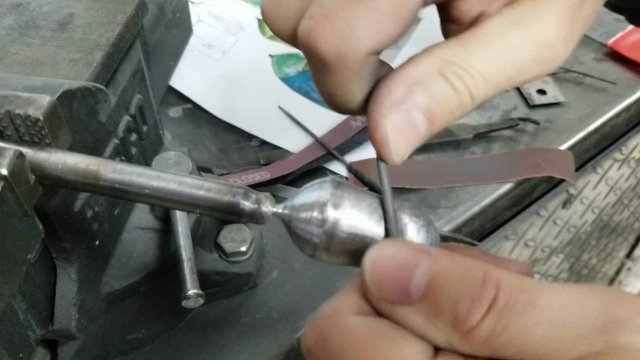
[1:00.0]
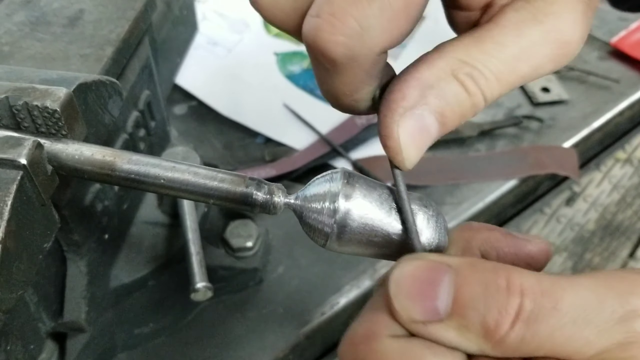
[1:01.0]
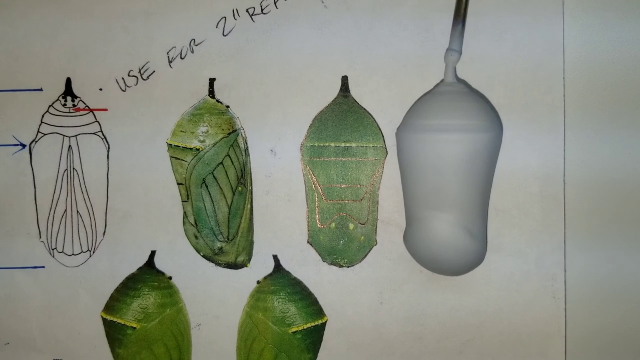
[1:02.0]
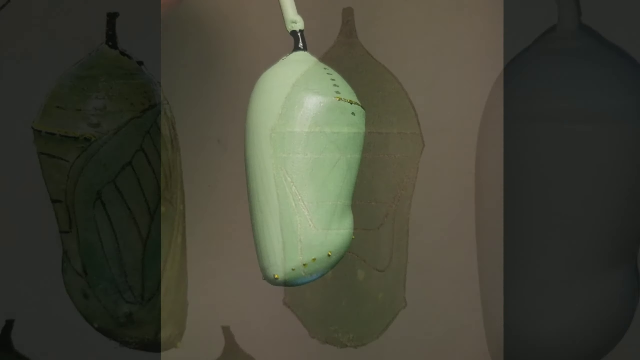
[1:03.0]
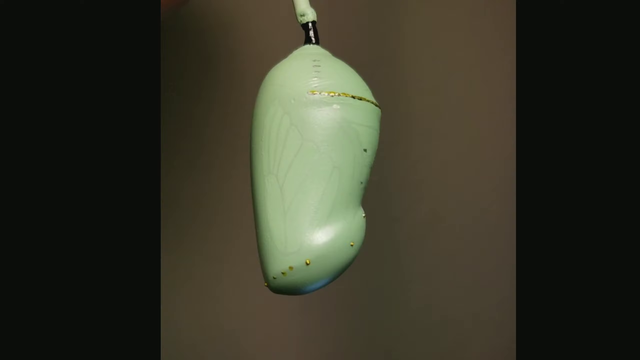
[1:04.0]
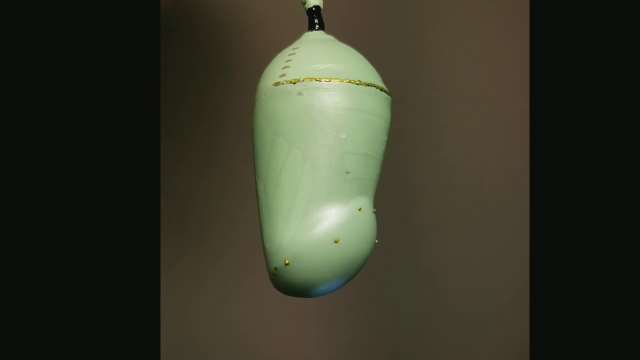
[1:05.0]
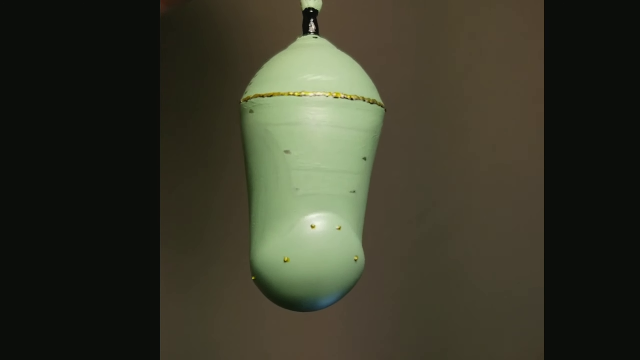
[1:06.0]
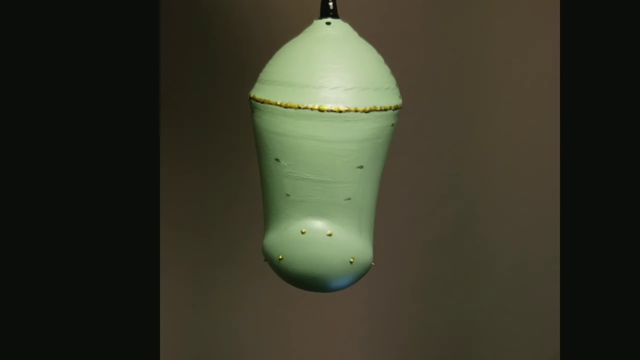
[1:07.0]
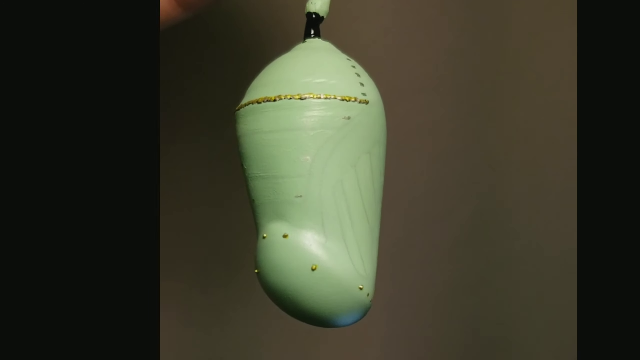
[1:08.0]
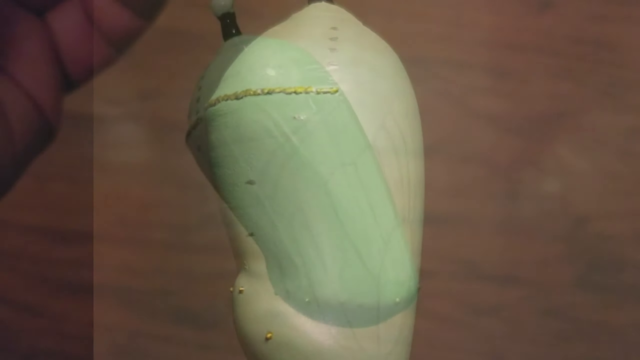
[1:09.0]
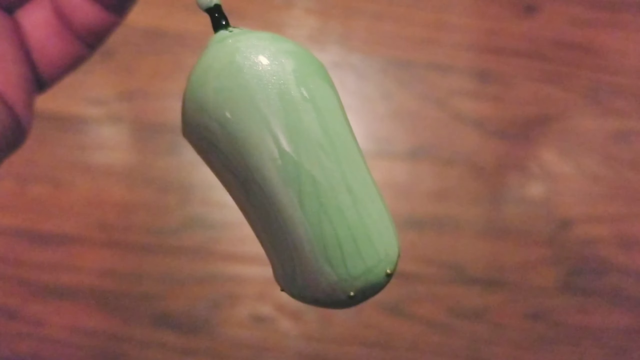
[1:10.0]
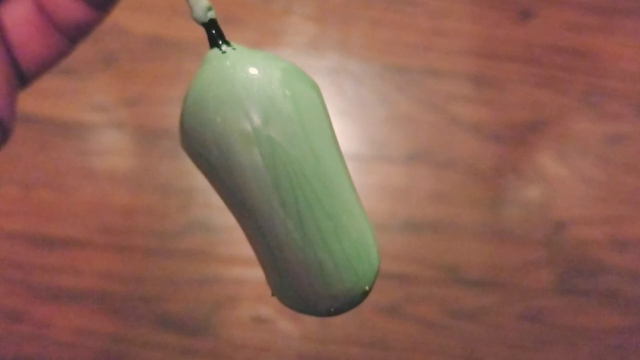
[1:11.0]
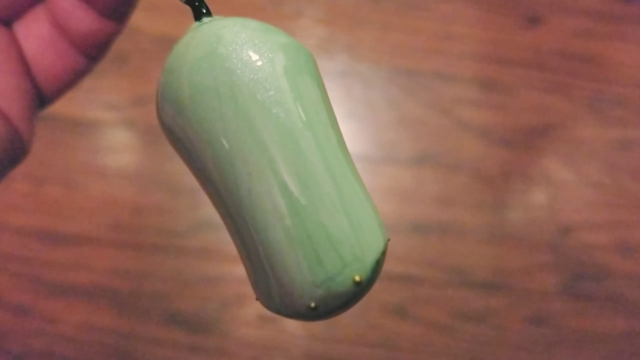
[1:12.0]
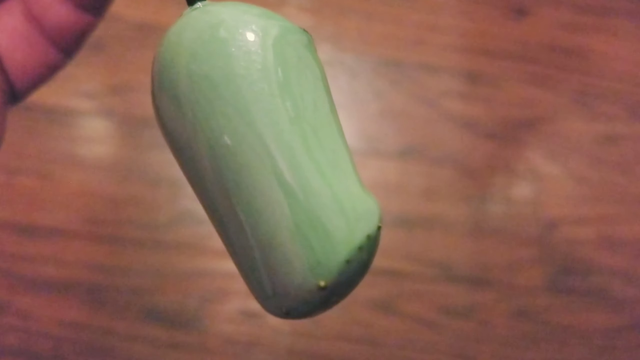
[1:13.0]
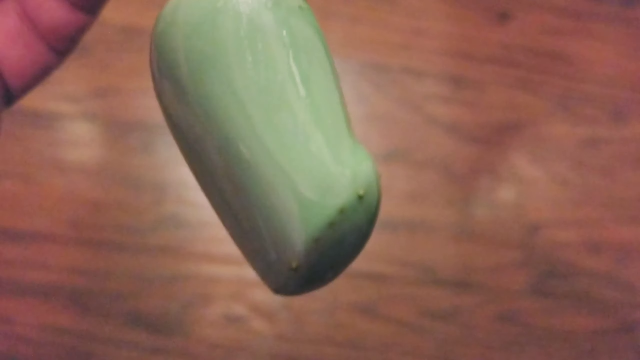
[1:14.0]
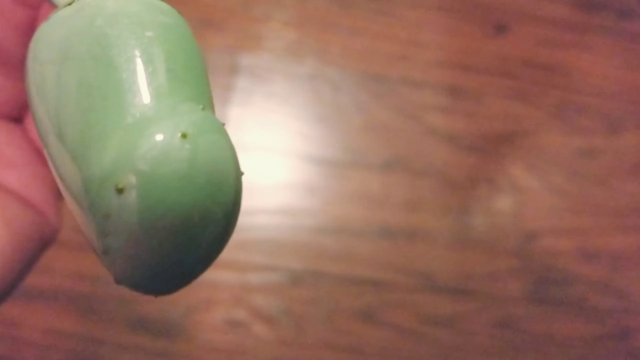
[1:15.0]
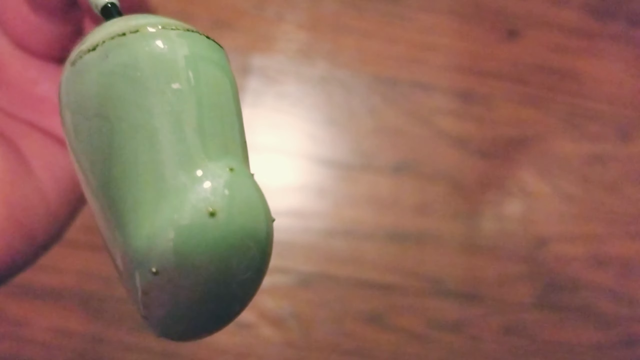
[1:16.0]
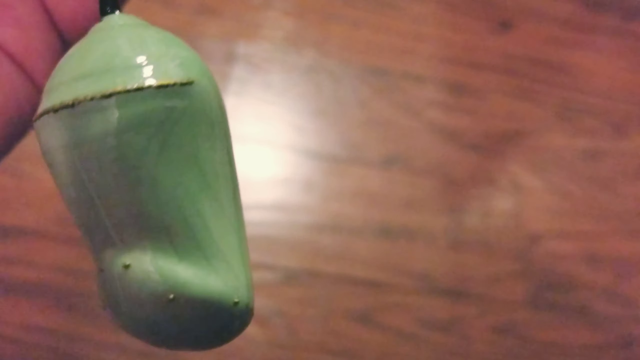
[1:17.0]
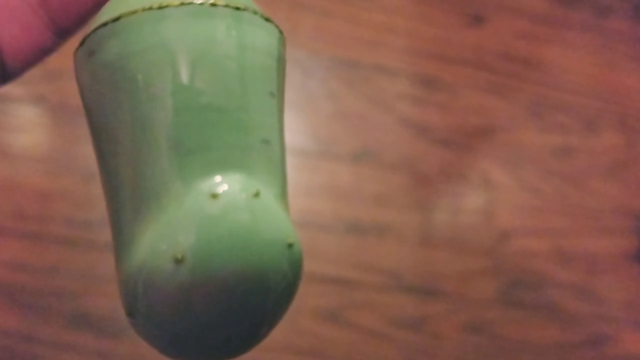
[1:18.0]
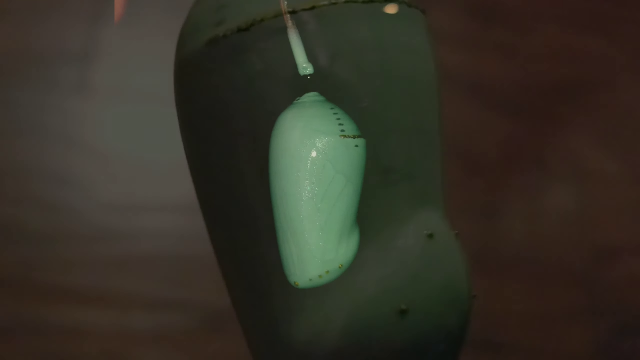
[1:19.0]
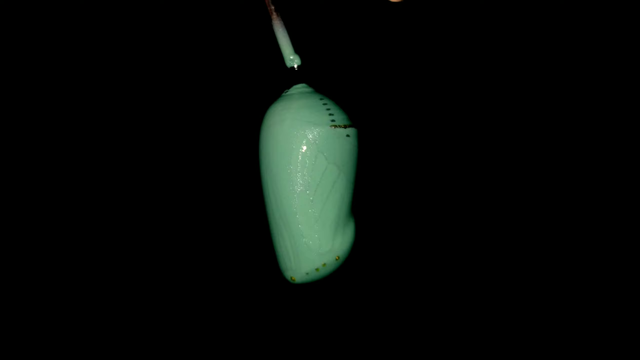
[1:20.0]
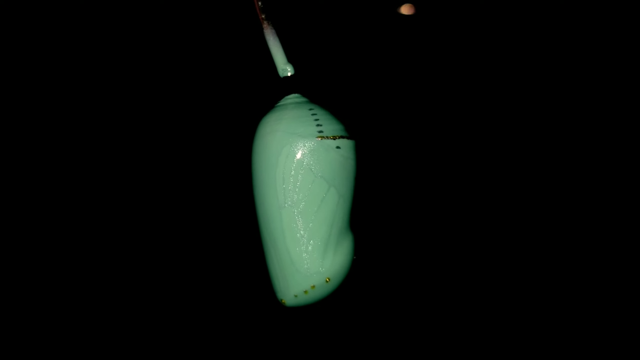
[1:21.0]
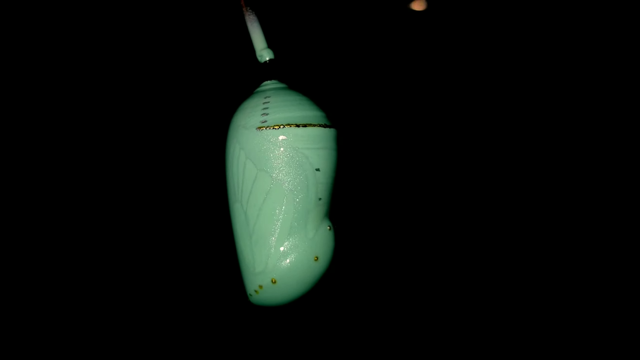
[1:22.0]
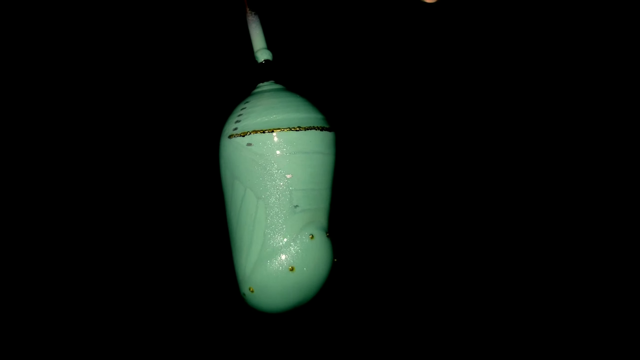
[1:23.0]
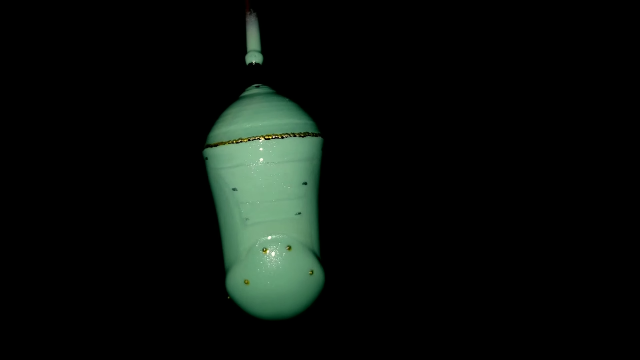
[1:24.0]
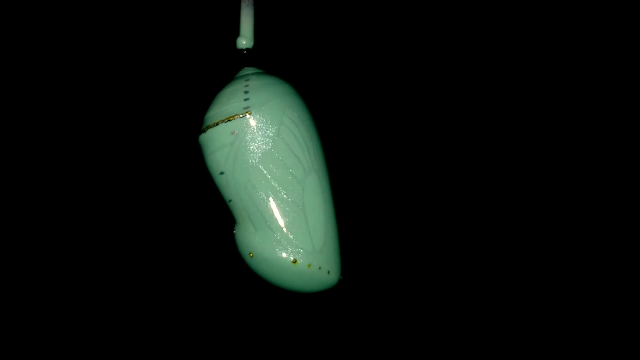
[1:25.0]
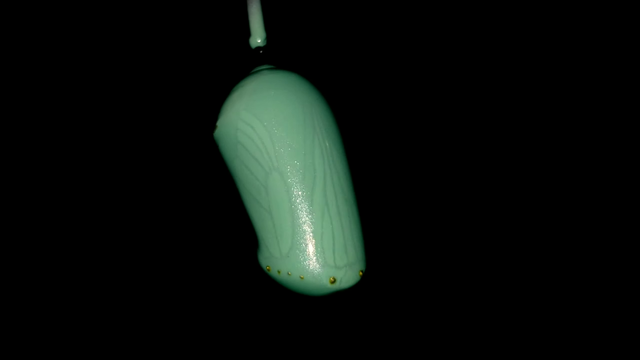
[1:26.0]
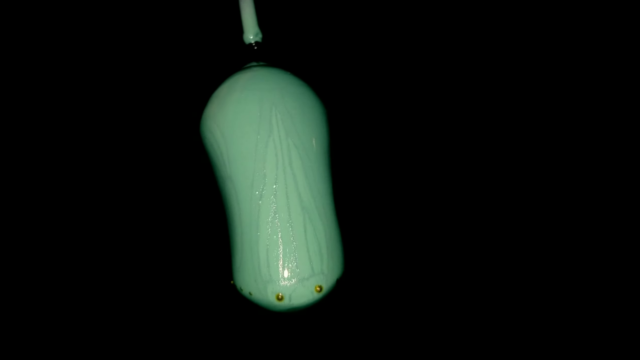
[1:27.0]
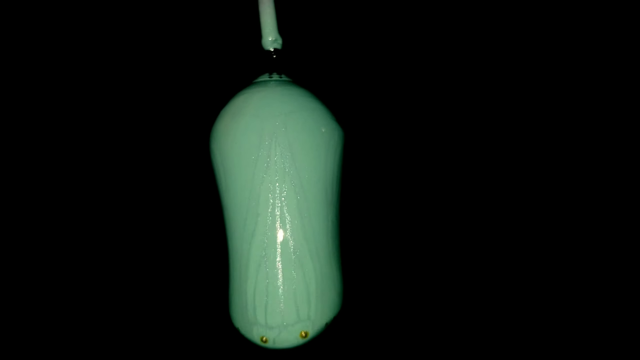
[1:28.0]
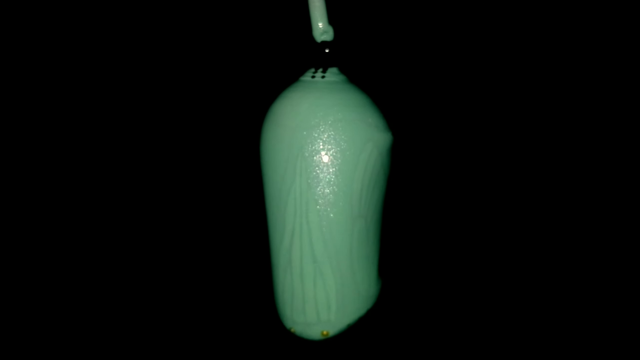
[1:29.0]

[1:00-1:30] Someone files a small metal cocoon that they have likely made. The person holds a file between both hands, with both the left and right thumbs pressed tightly over the top of it, and rubs it against the small metal cocoon-like object, filing up and down and then moving diagonally from bottom to top. The video changes to the image of the green cocoon drawings, zooming in on them as they fade away. Behind it is a shot of what looks like a white cocoon being held, with something sticking out of the top; it looks like a white cocoon that maybe has metal under it, with small metal accents around it, including metal dots and a small metal line at the top. The cocoon turns toward the left side, showing its bottom angle as well, and the shot slowly zooms in on it as it fades away. Then what appears to be the same white cocoon is shown held by a hand; the bottom of the hand, around the pinky, is visible as it turns the cocoon slowly and moves it back and forth toward and away from the camera.